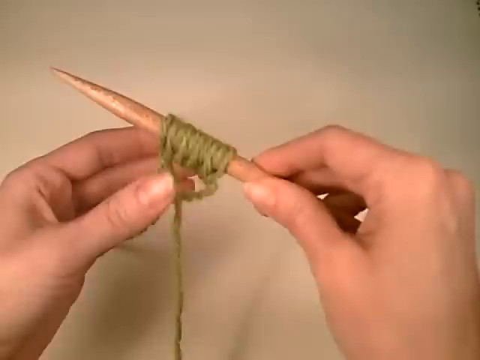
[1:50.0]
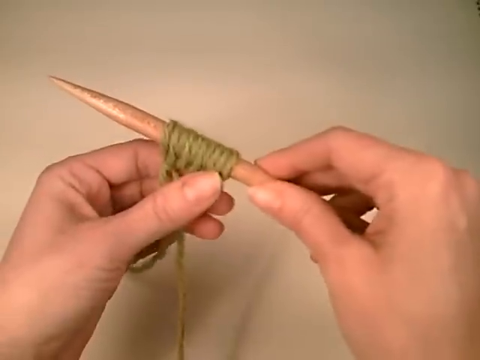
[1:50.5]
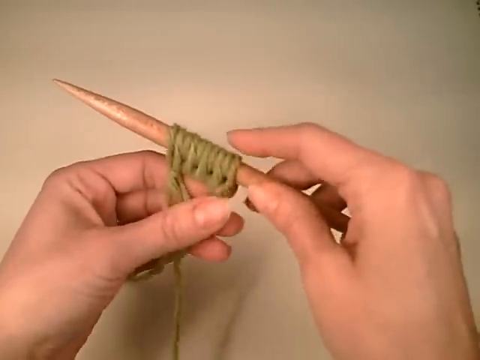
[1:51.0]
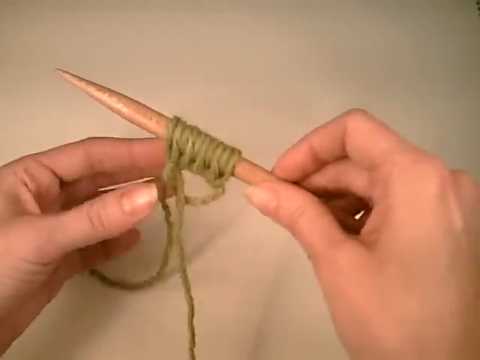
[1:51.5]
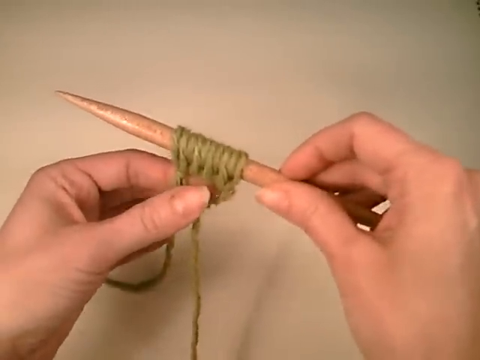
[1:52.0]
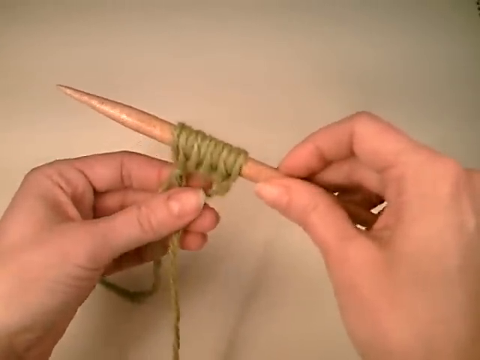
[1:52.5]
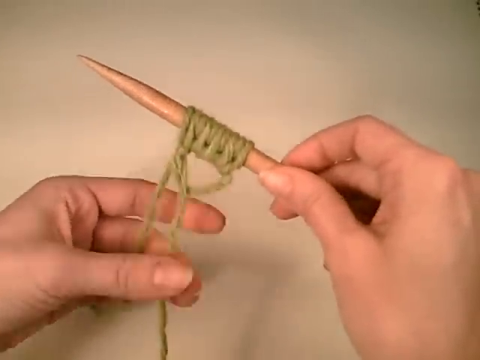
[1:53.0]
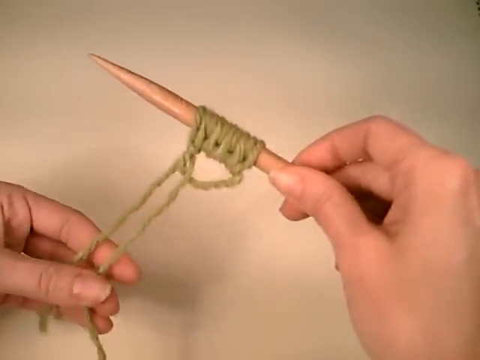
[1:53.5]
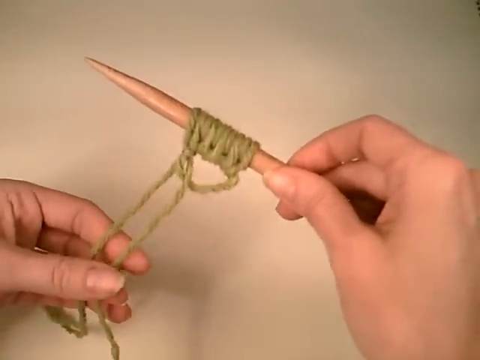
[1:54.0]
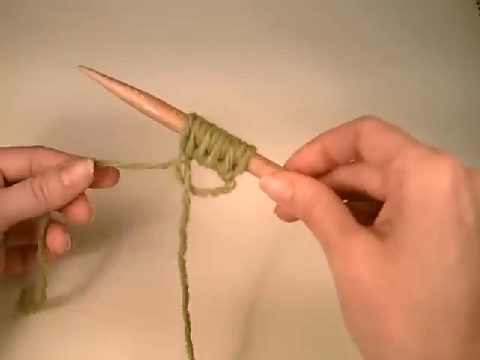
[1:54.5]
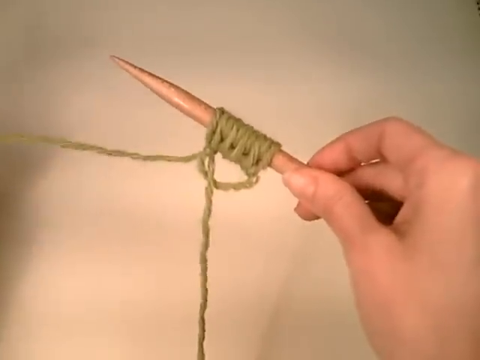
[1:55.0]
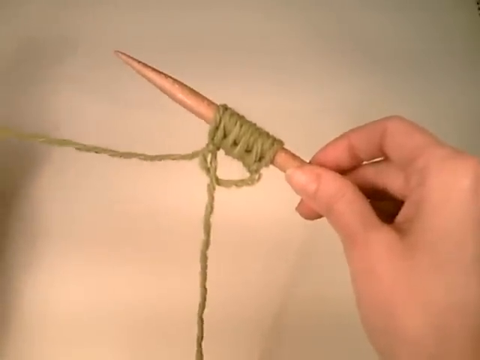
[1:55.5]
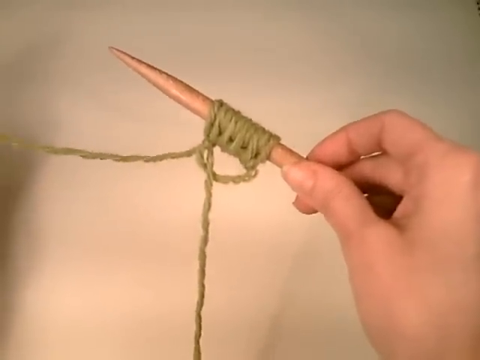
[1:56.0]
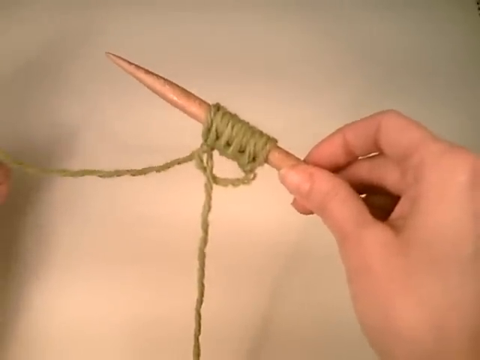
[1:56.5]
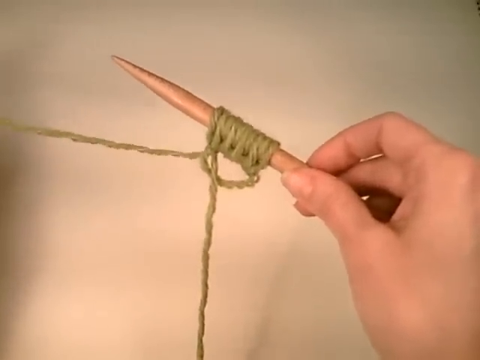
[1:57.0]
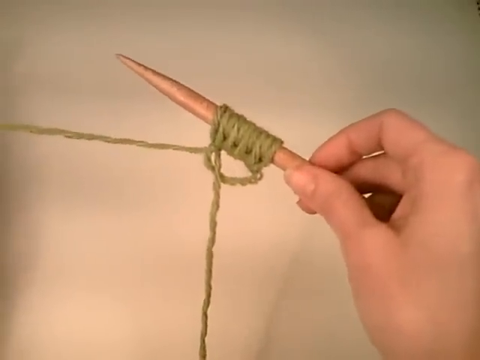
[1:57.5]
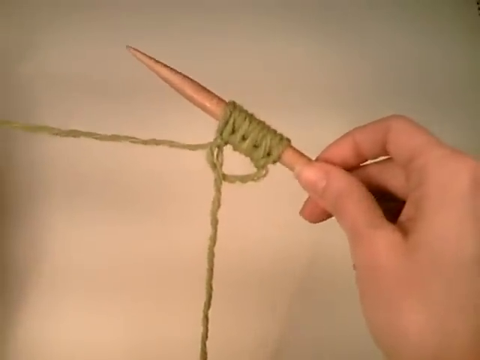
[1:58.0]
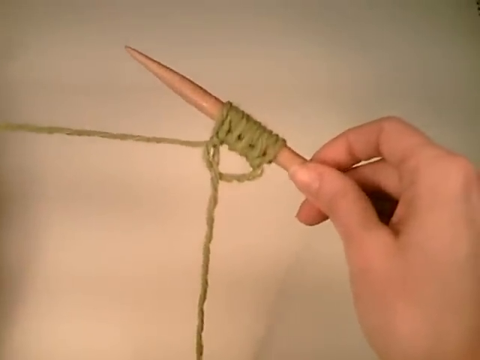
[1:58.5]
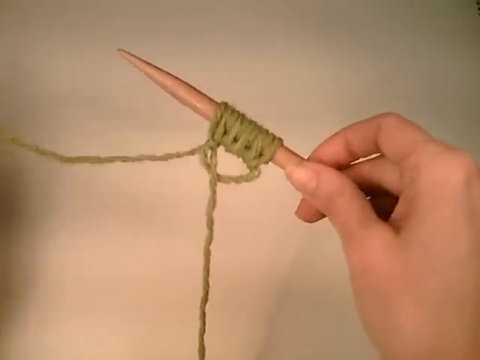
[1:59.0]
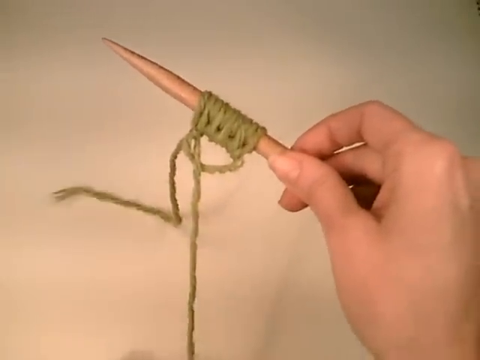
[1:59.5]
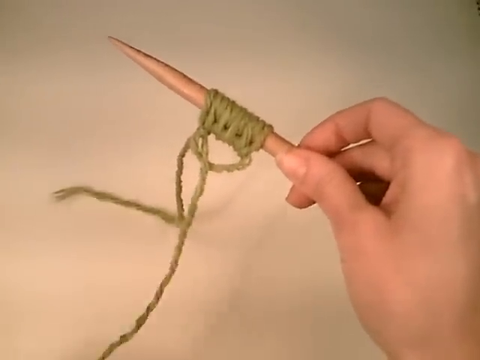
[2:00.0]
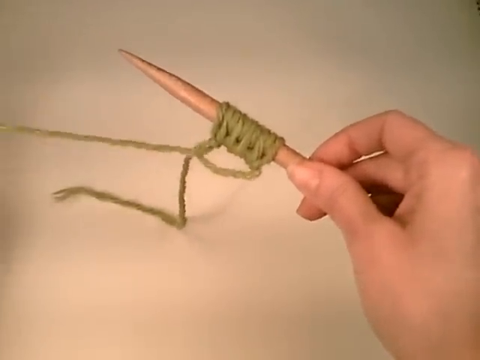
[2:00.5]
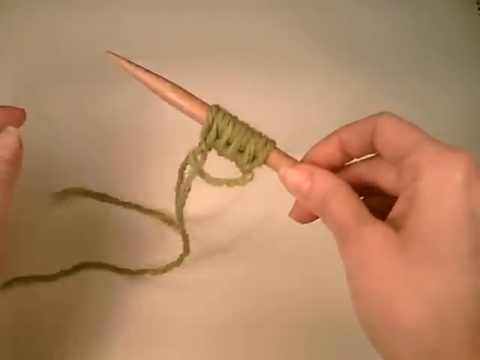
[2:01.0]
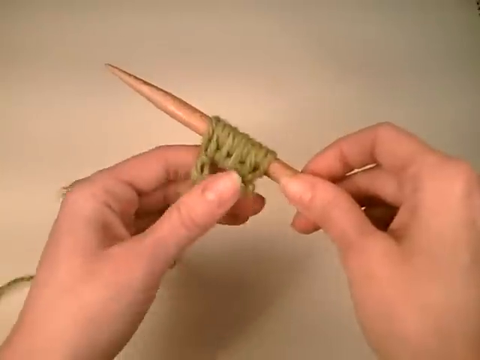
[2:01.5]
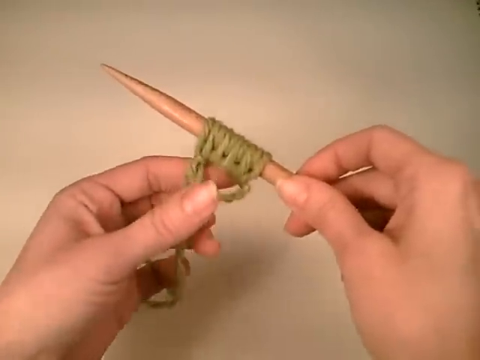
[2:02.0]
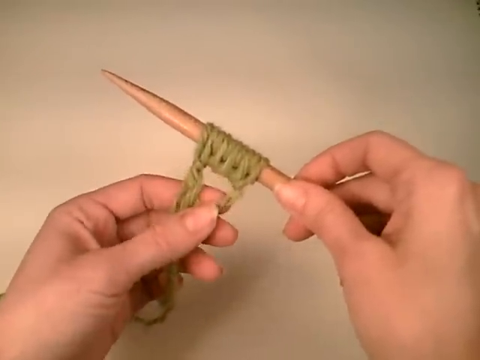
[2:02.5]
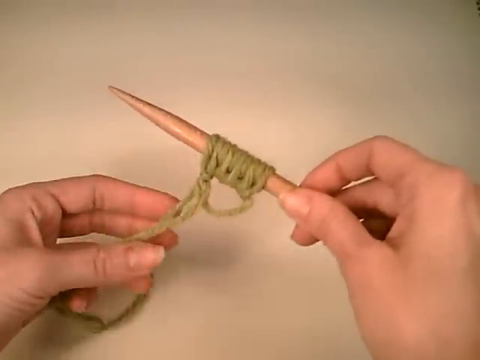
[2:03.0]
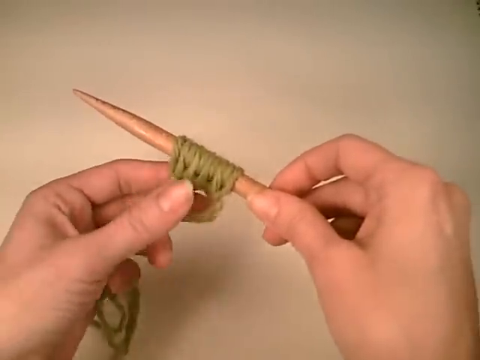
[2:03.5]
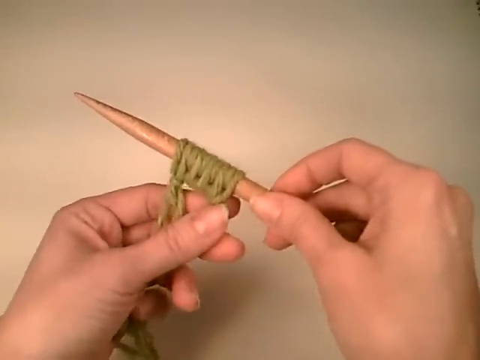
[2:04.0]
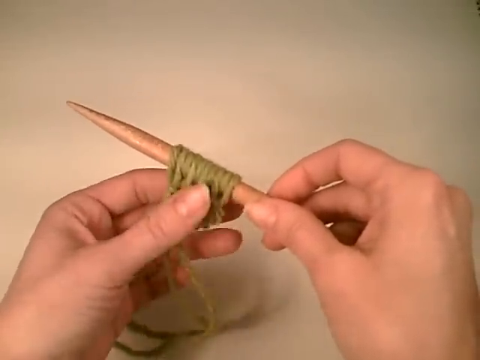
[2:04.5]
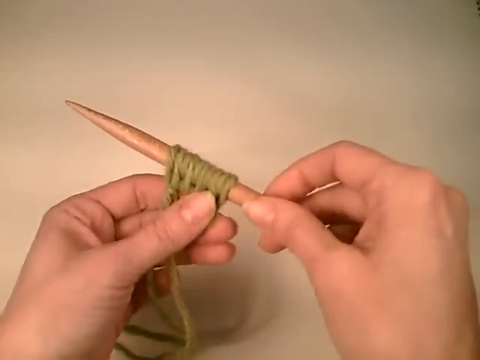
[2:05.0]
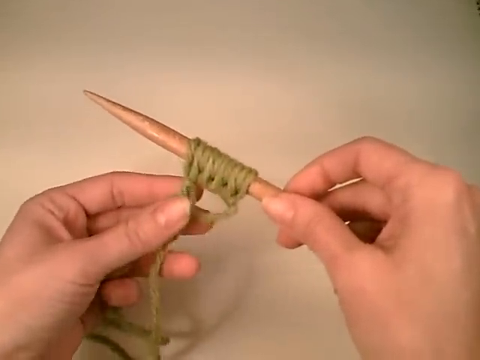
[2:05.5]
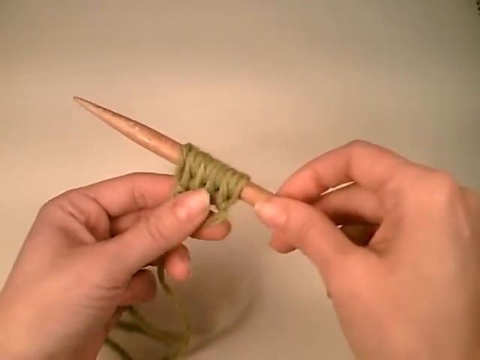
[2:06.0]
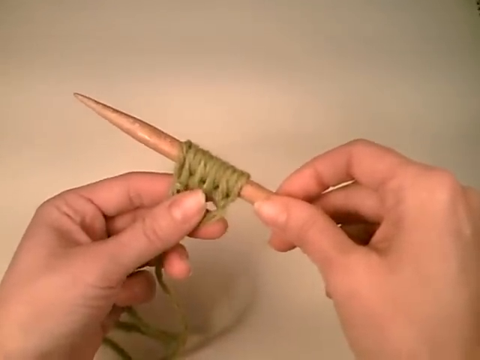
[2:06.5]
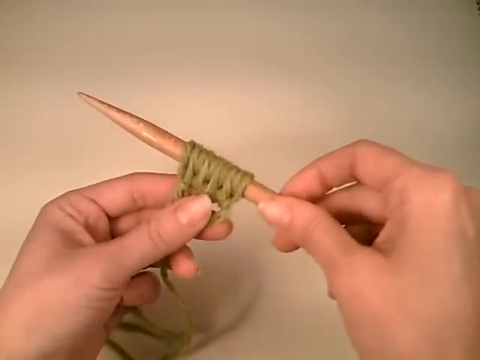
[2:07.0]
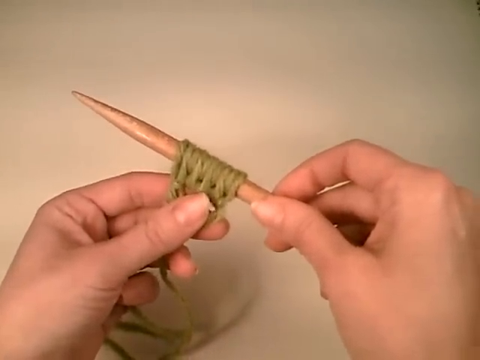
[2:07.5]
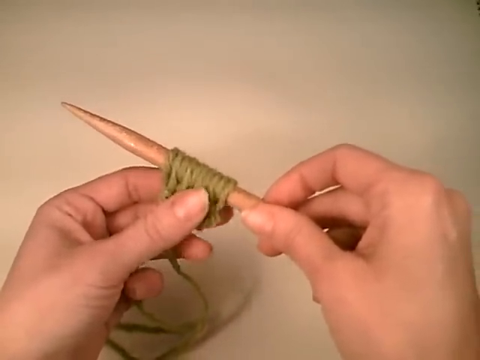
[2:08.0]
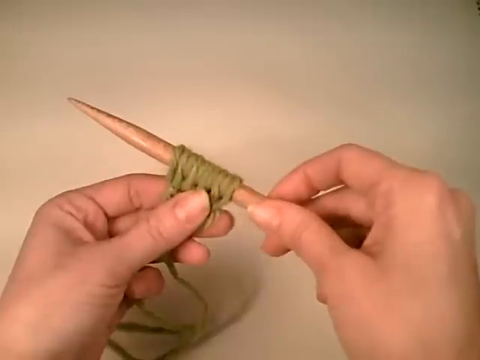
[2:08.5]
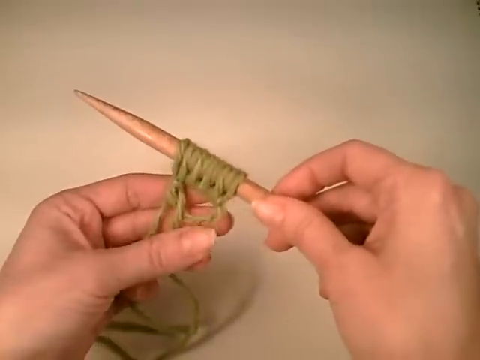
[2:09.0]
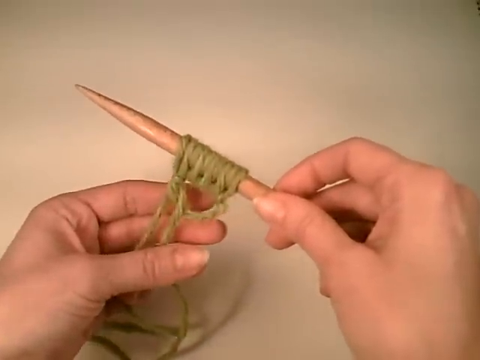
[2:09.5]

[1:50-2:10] Two hands knit against a brownish background, the right hand holding a wooden knitting needle and the left hand mainly holding the thread. Parts of the thread are intertwined into rings of knots around the stem of the needle. The left hand pulls two strands of the same thread in succession, probably to illustrate what has been made so far. Apart from the ring-like knots around the stem, there is another round knot below the rings. From the pauses and hand movements, the individual appears to be explaining while continuing the process. The person is probably a white woman, based on the skin.